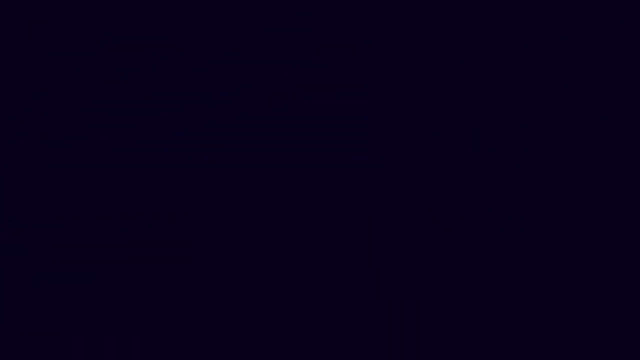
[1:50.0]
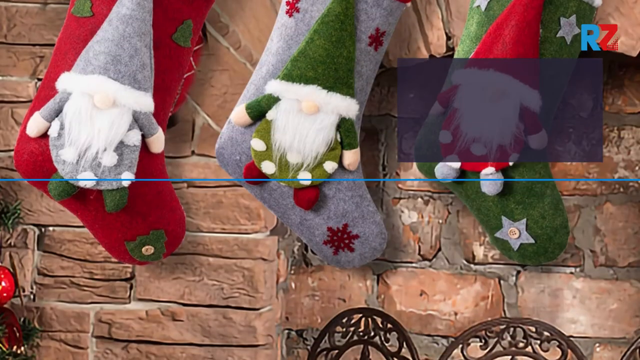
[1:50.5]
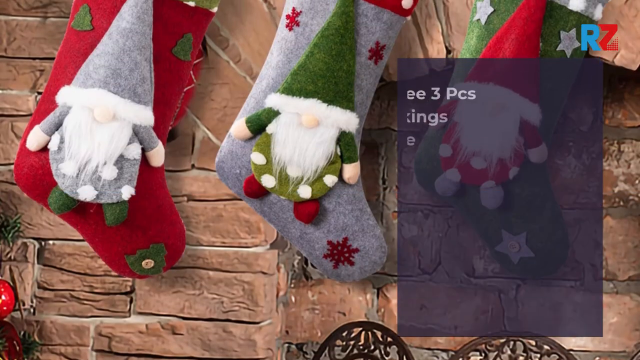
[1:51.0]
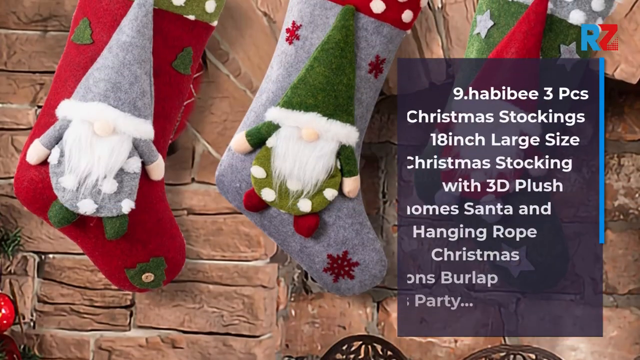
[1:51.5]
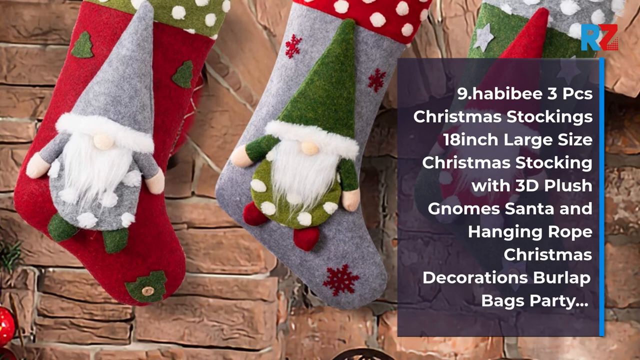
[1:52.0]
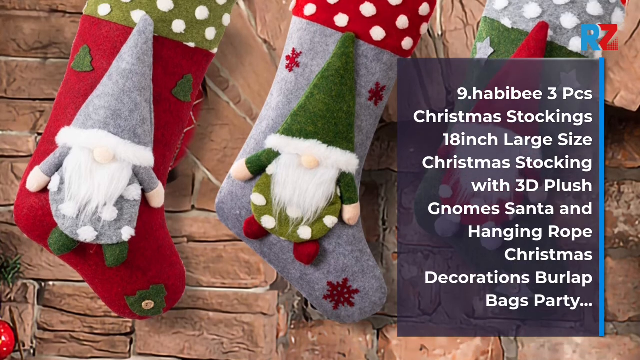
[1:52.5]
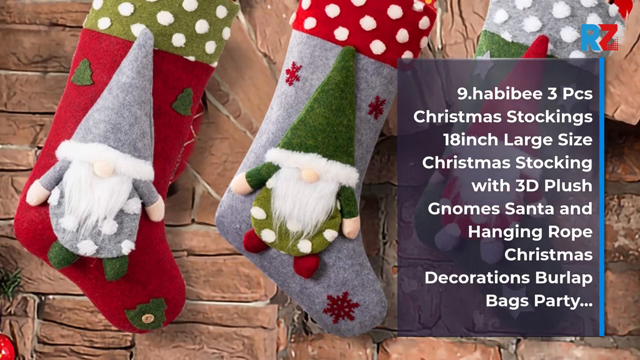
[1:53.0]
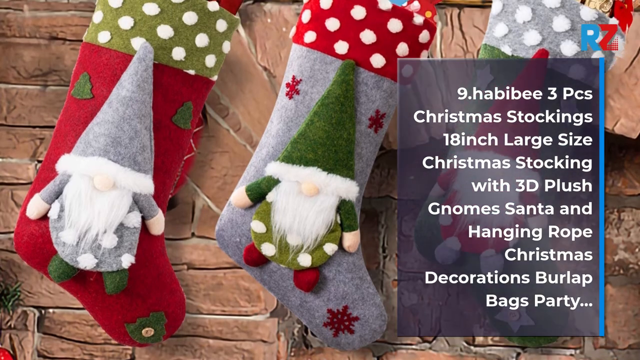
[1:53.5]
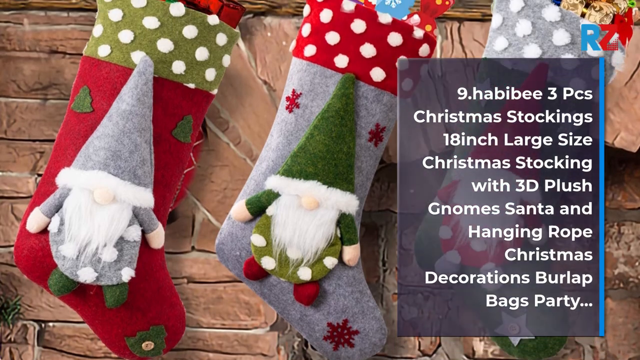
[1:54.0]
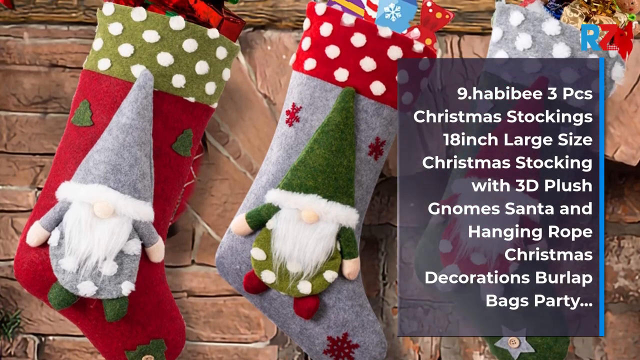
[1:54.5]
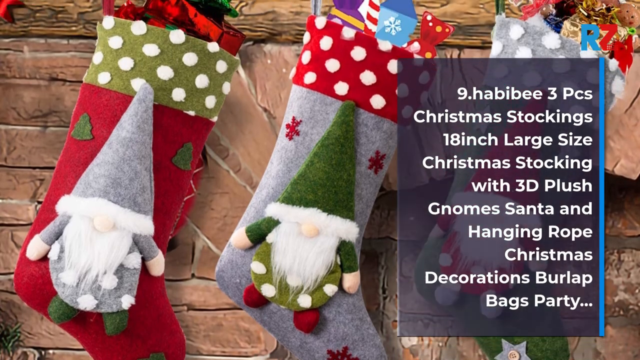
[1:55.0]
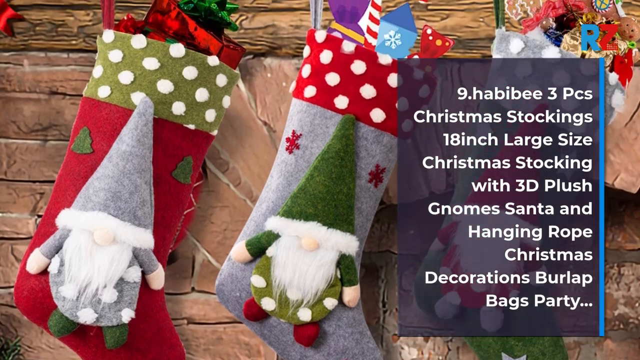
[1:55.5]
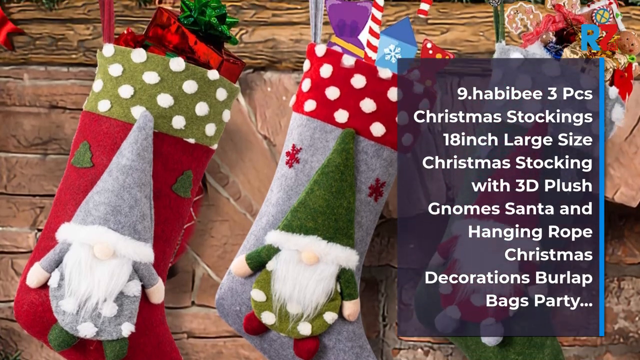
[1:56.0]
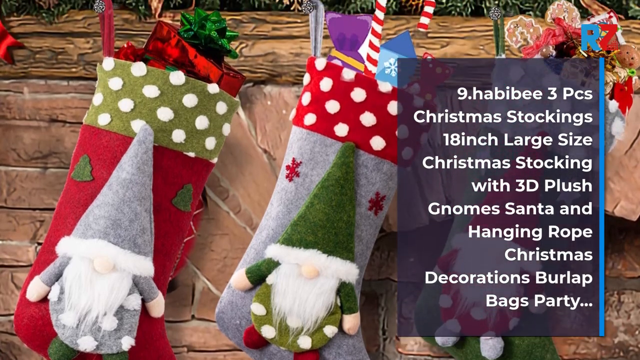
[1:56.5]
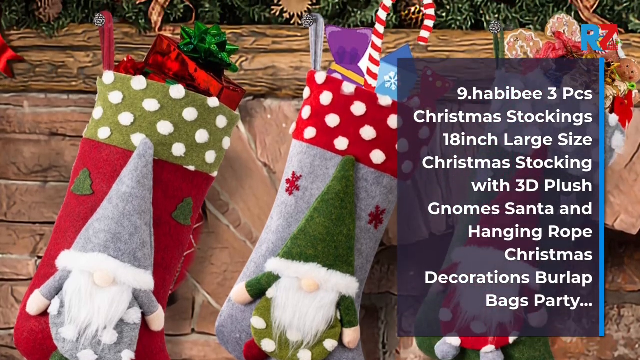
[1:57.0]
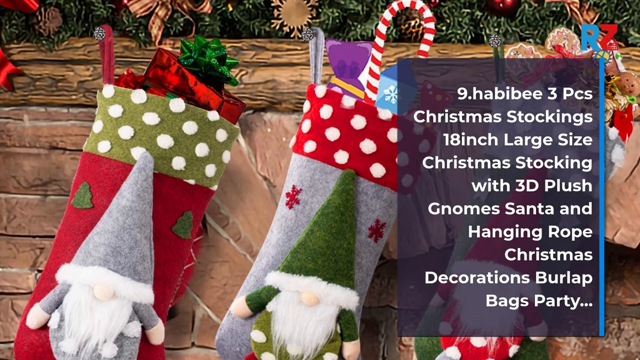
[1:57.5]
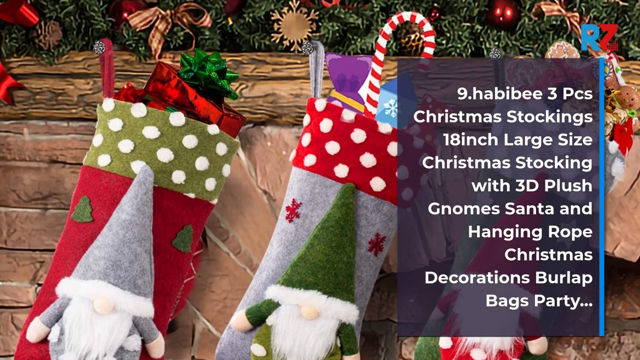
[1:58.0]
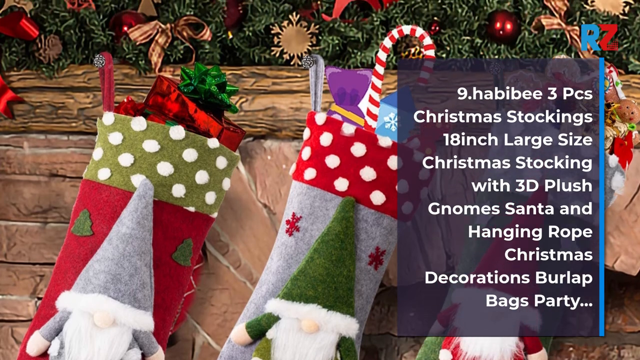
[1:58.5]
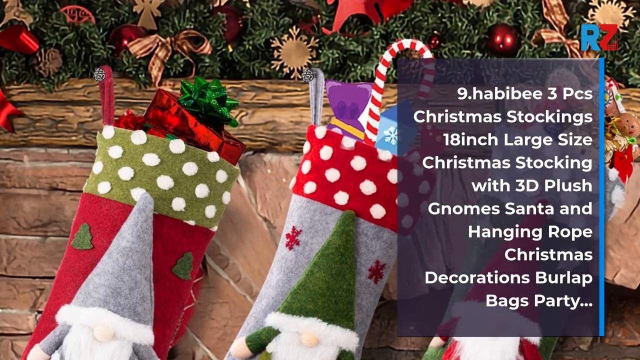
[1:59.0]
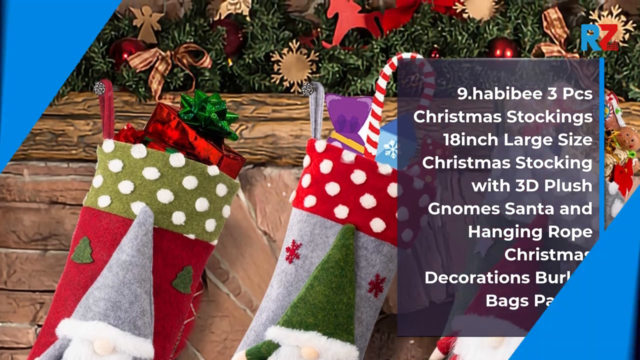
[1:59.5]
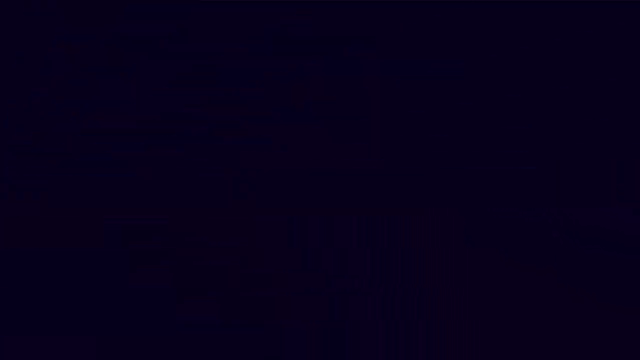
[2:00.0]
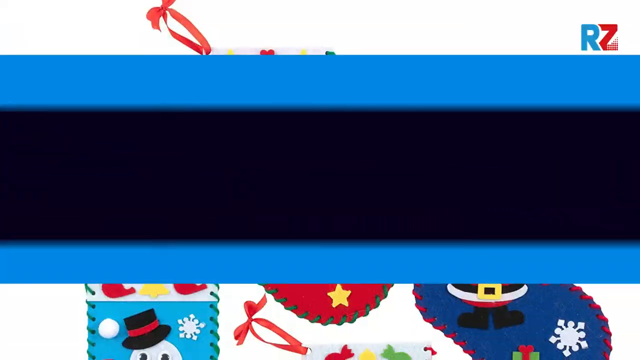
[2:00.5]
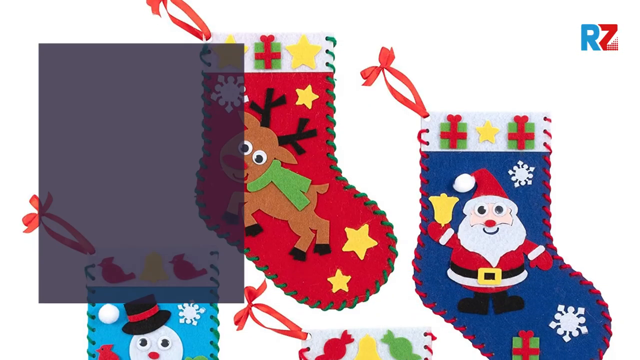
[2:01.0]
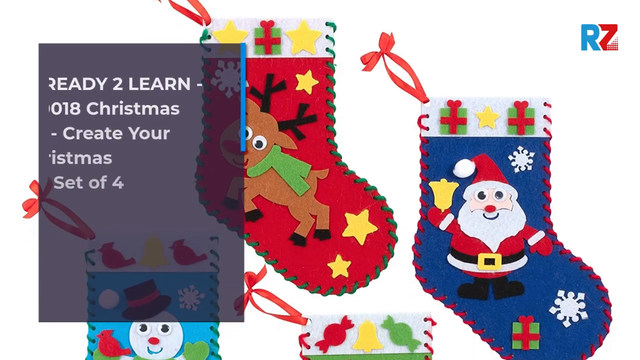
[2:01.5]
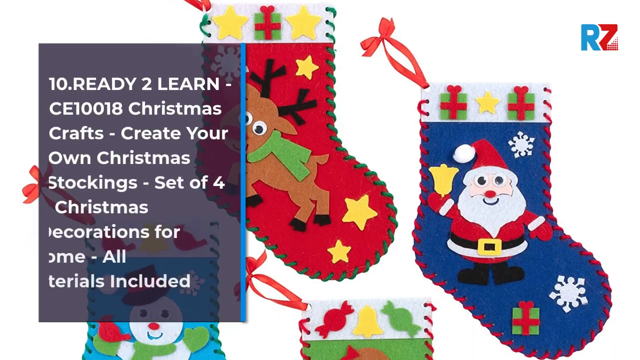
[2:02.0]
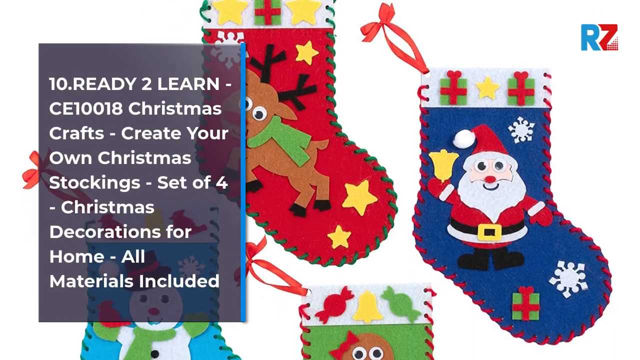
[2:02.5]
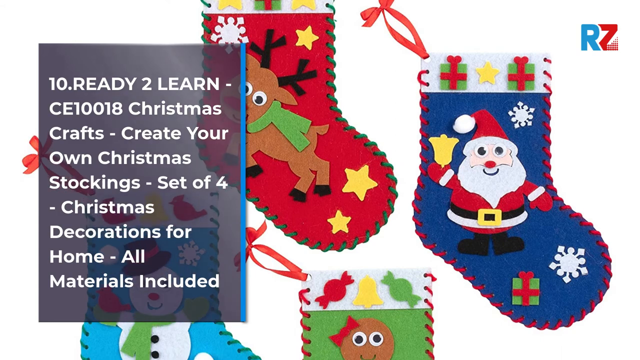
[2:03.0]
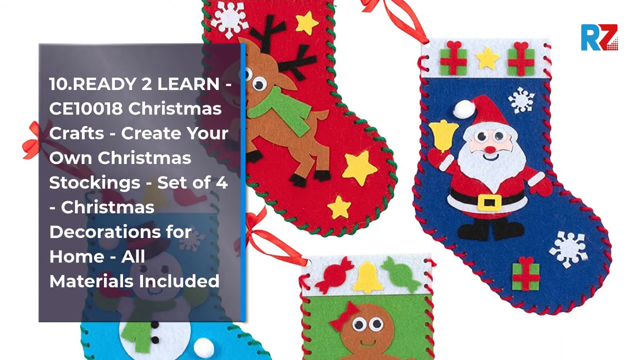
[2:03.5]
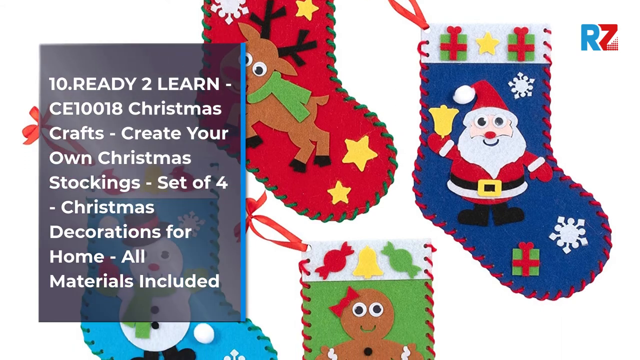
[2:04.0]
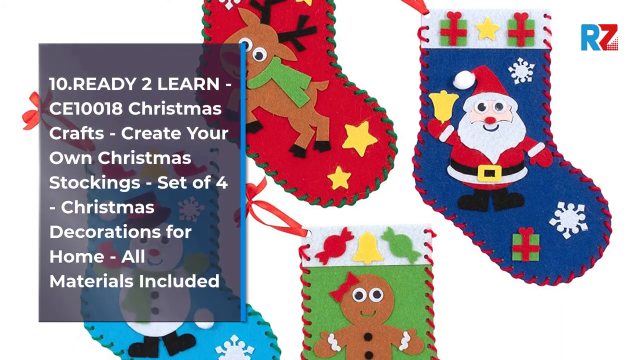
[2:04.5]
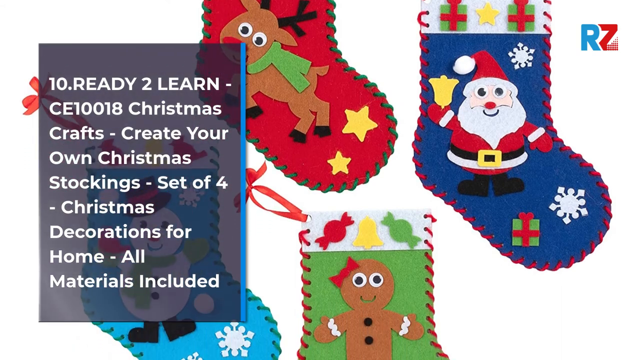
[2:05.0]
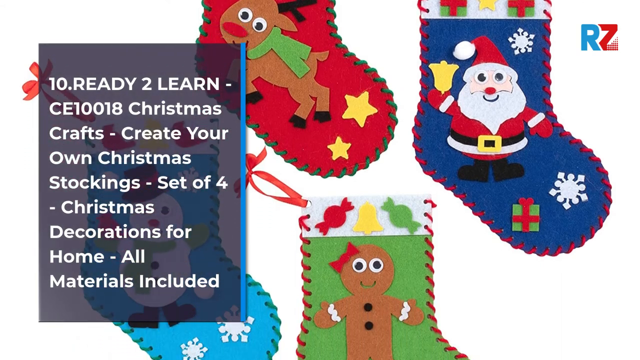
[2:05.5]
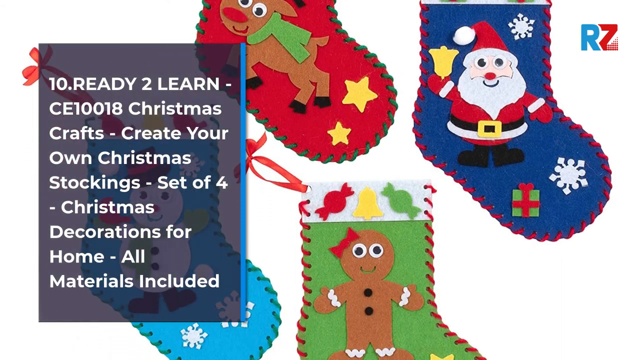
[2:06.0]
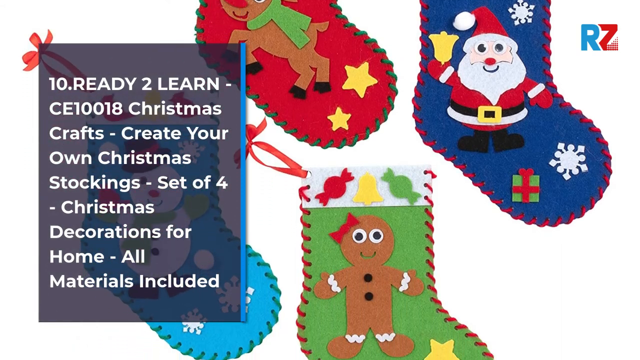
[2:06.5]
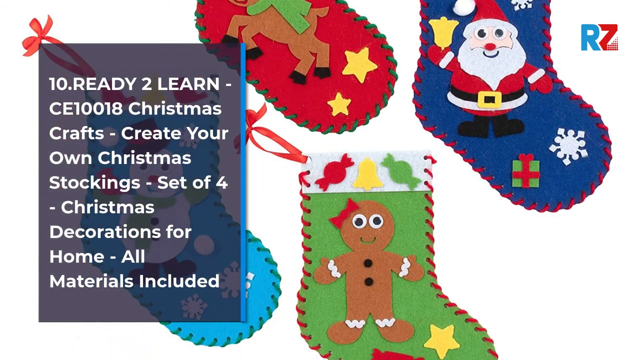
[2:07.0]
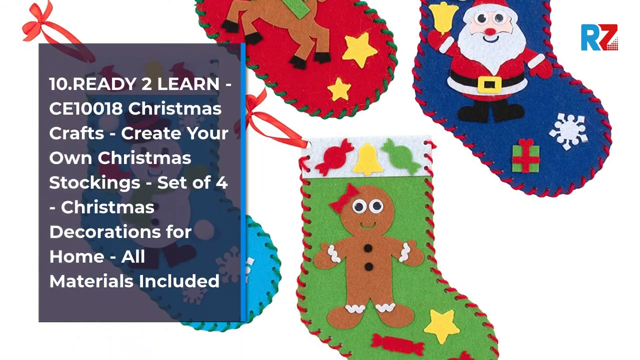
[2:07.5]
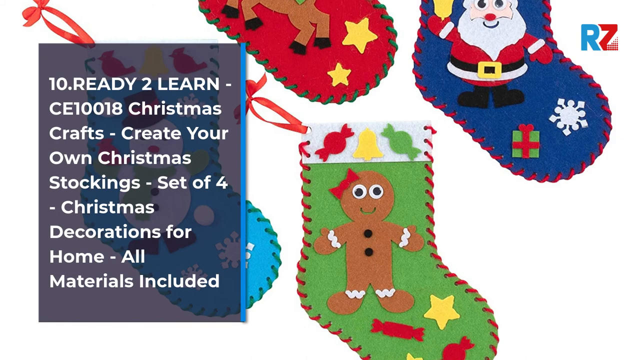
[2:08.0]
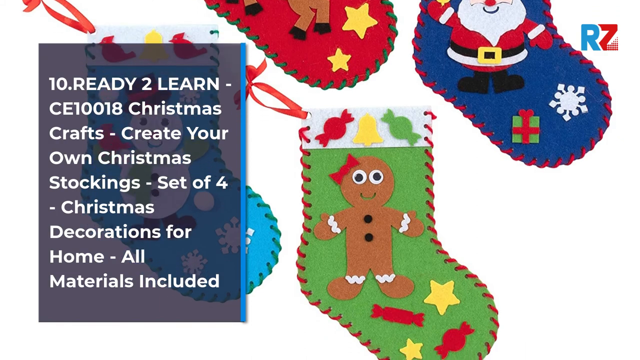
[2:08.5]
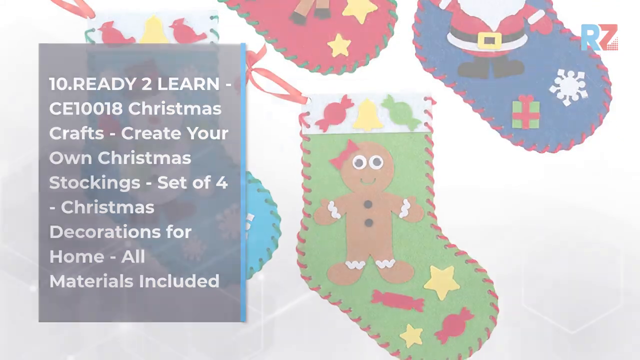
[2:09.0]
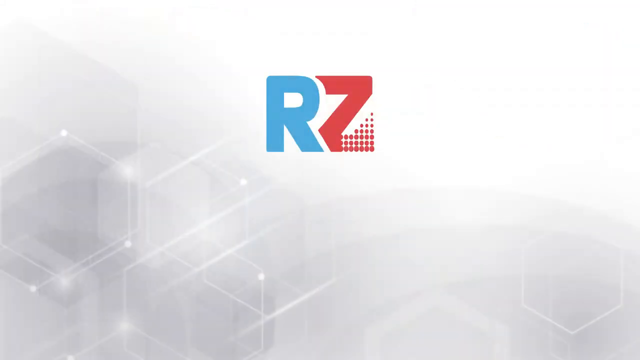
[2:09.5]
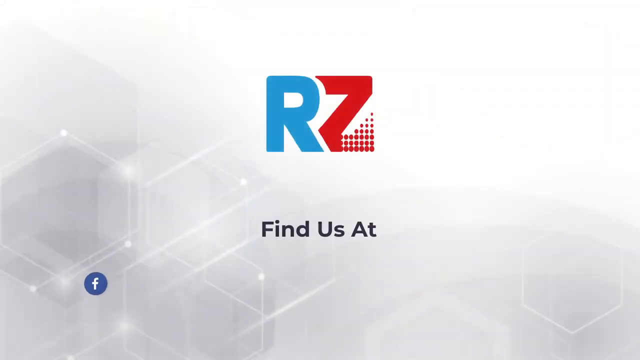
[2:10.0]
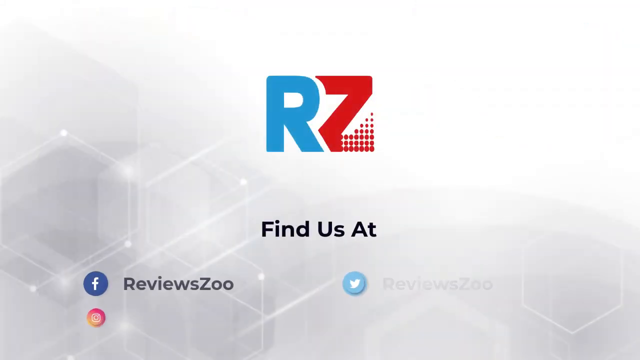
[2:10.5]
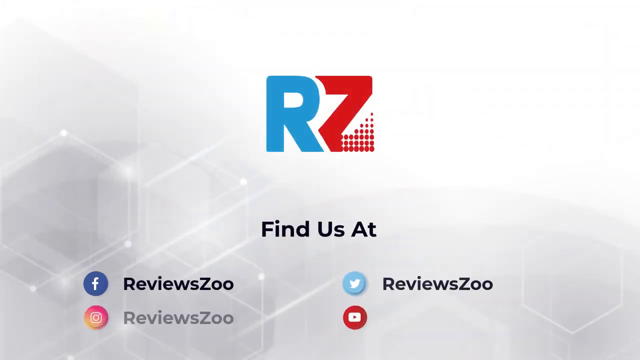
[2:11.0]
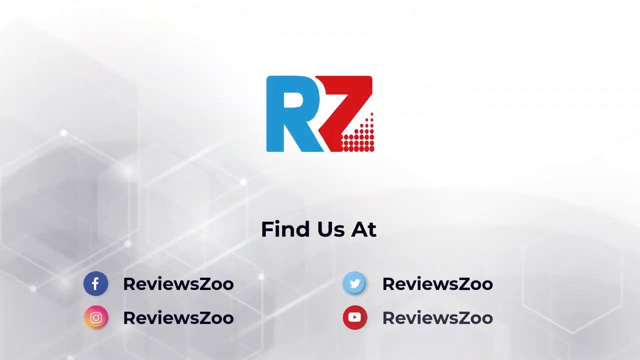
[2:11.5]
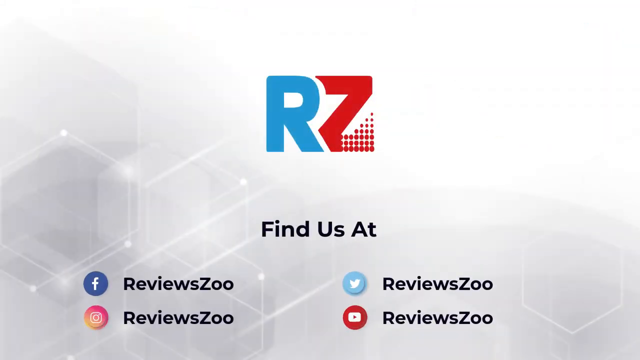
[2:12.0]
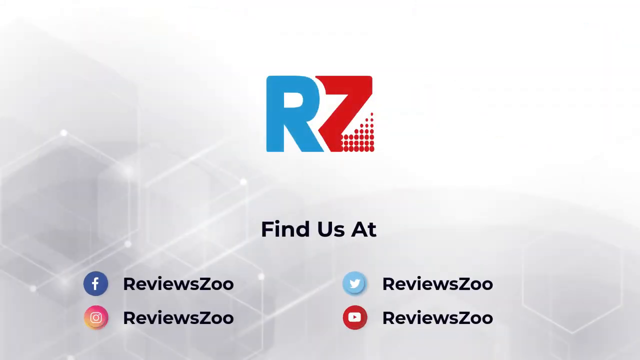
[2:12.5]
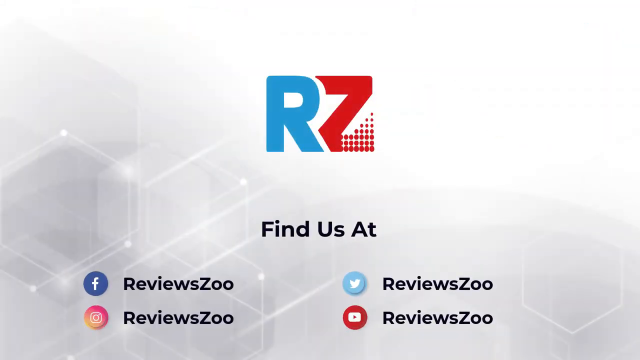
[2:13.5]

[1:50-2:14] The last stockings are number nine, the Habibi three-piece Christmas stockings, 18 inch large size with 3D plush gnome Santa and hanging rope, Christmas decorations, burlap bags, party; these are the ones from the first second of the video. There are three stockings with three gnomes, each in a different color: one gnome is gray, one is dark green, and one is red. The gray gnome is on the red stocking, the green gnome on the gray stocking, and the red gnome on the green stocking. Each gnome is big, with a giant triangle hat and a beard, and has polka dots on its costume. The top layer of the stockings is polka-dotted, and on the sides of the stockings there are little mini trees, snowflakes, or stars.